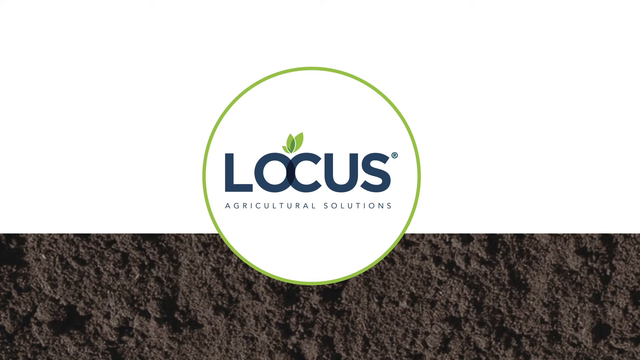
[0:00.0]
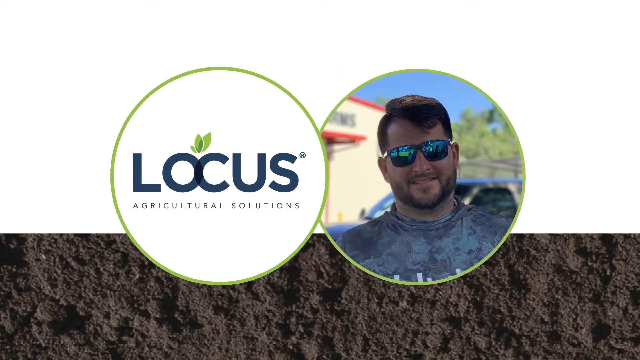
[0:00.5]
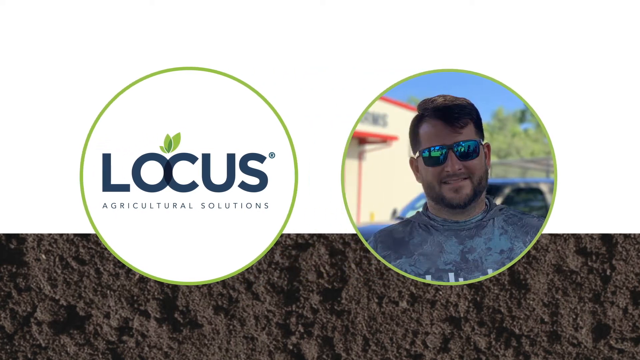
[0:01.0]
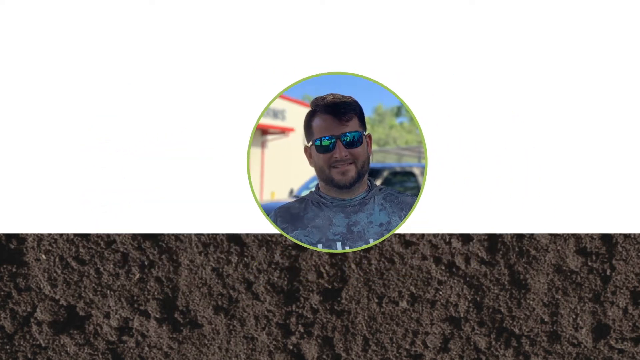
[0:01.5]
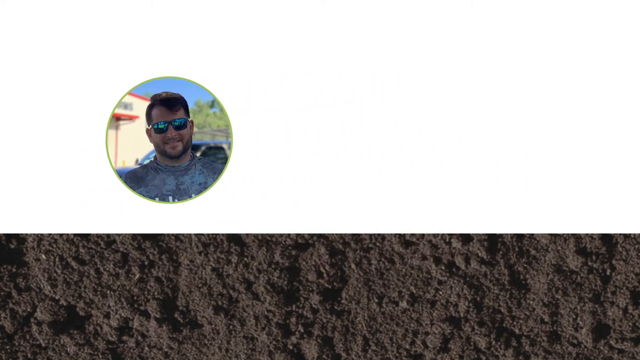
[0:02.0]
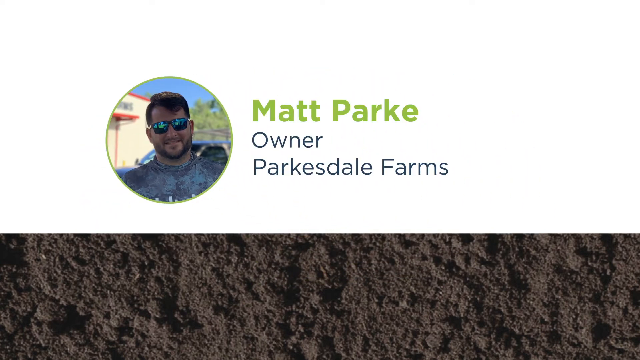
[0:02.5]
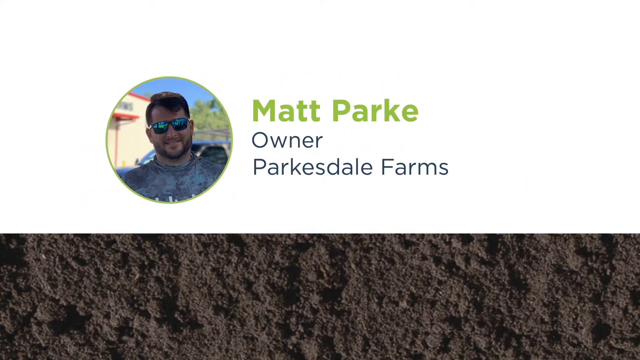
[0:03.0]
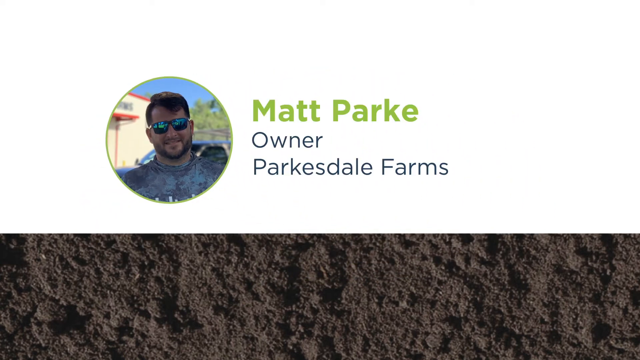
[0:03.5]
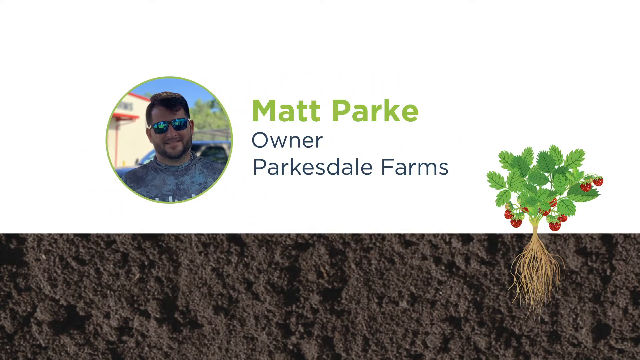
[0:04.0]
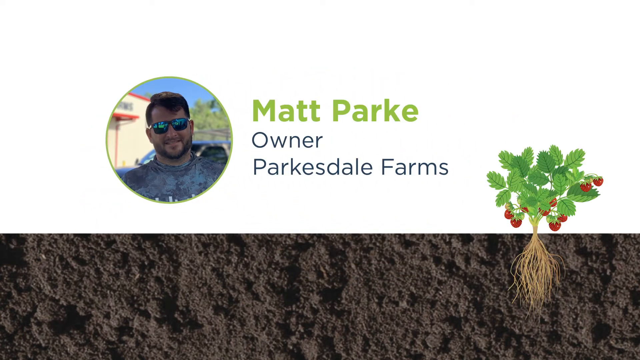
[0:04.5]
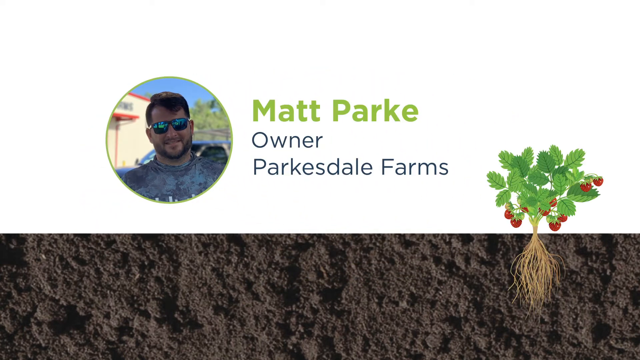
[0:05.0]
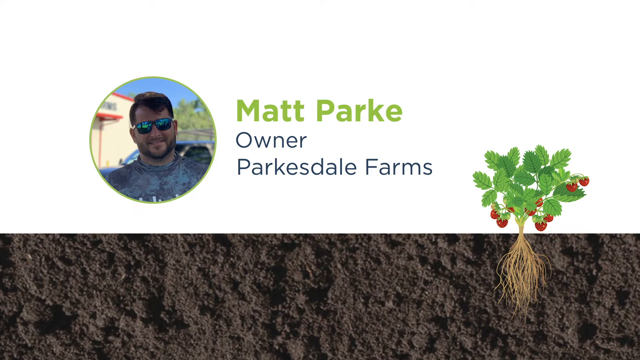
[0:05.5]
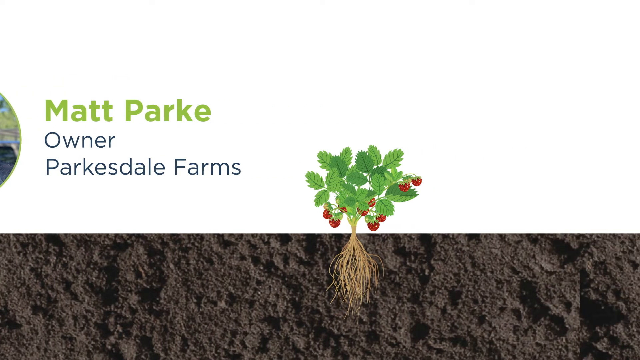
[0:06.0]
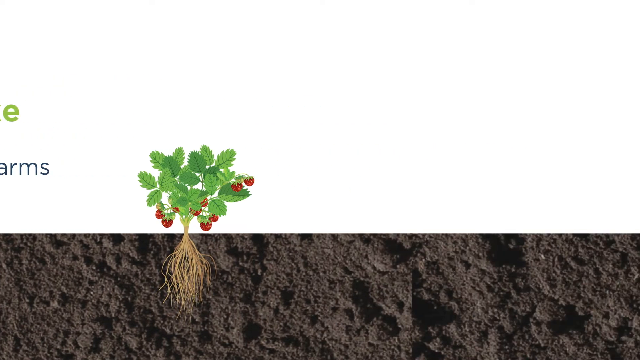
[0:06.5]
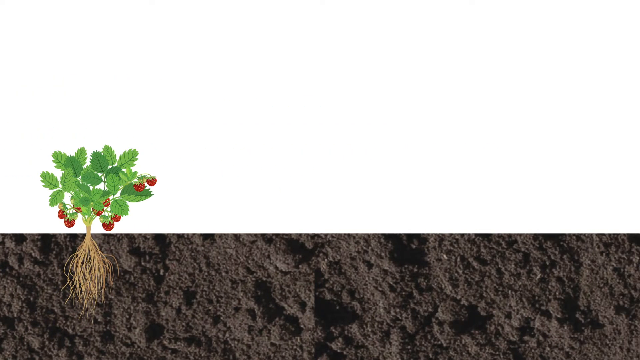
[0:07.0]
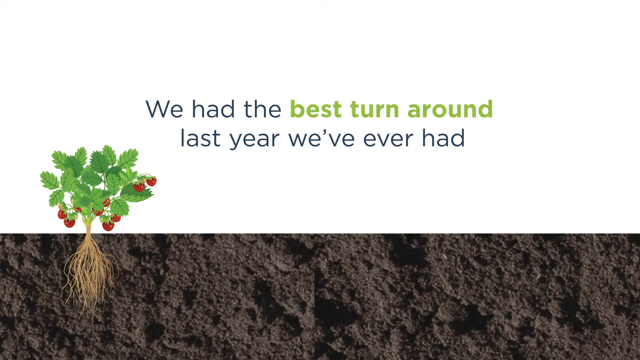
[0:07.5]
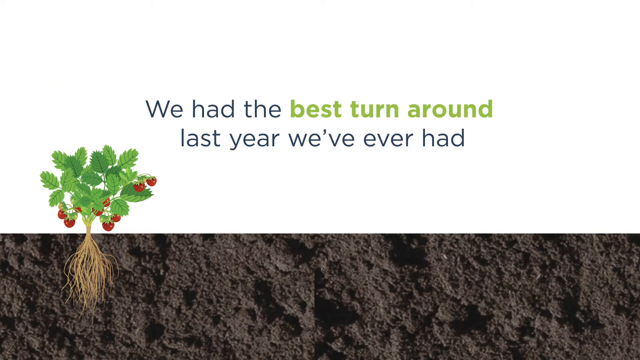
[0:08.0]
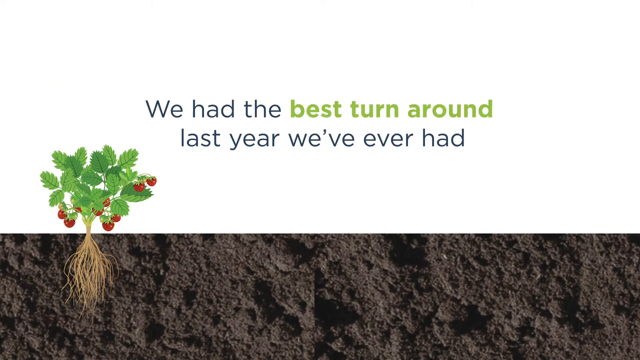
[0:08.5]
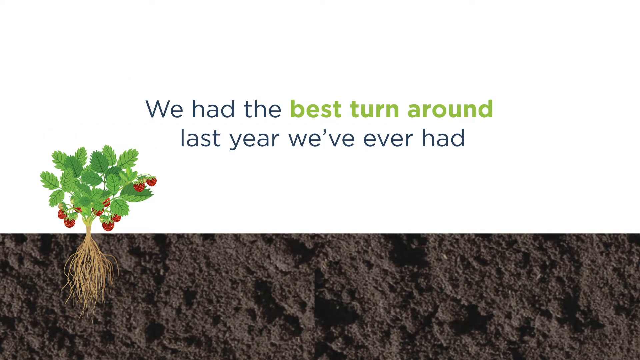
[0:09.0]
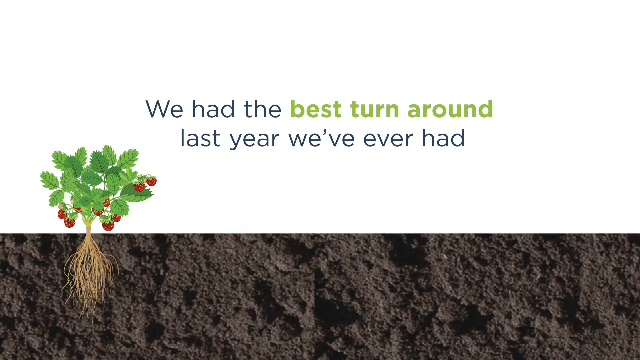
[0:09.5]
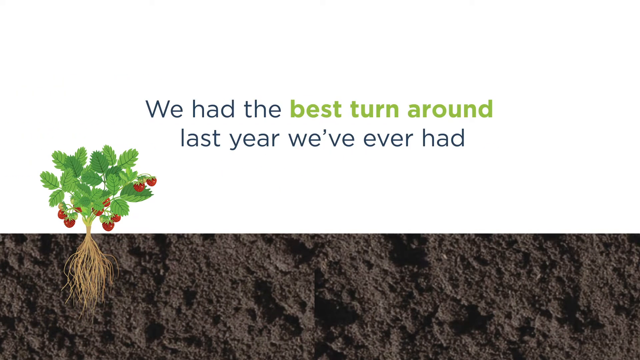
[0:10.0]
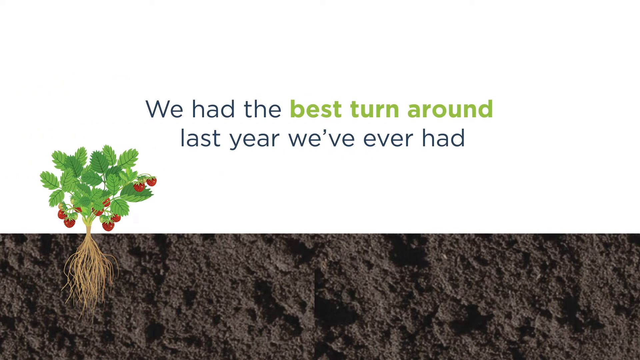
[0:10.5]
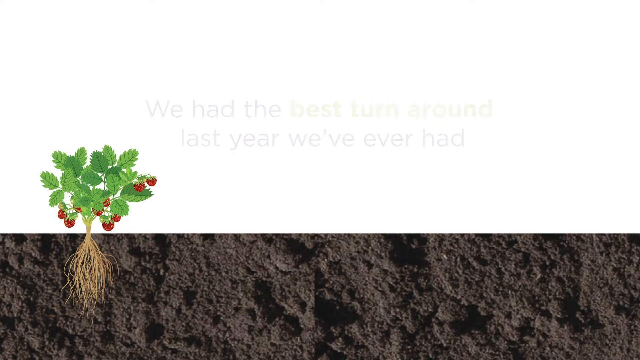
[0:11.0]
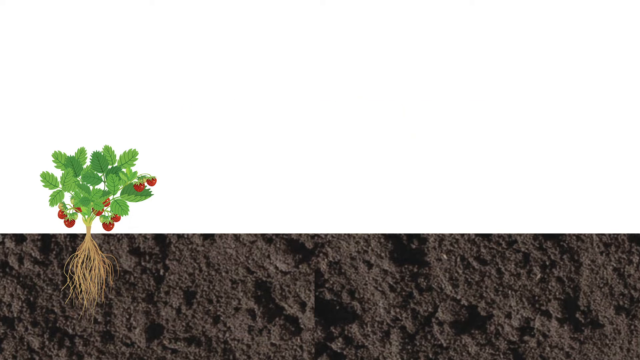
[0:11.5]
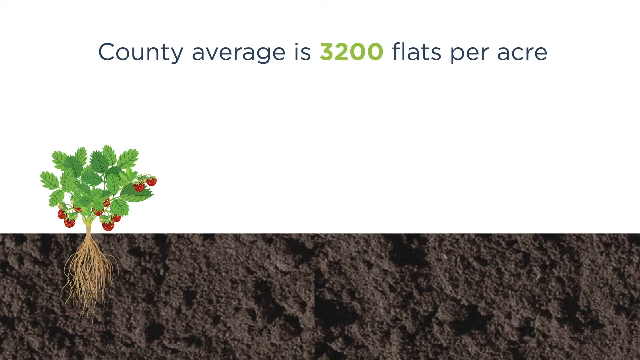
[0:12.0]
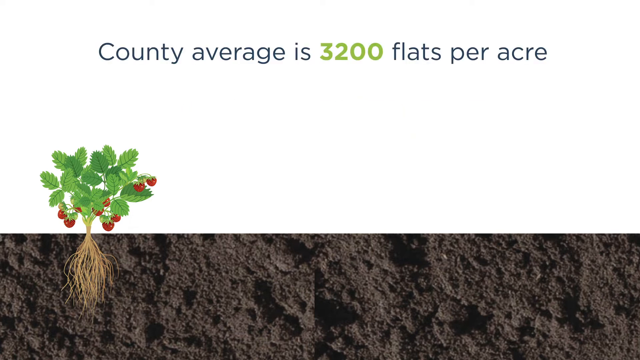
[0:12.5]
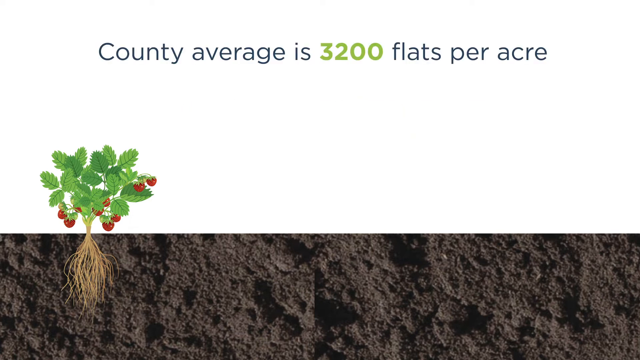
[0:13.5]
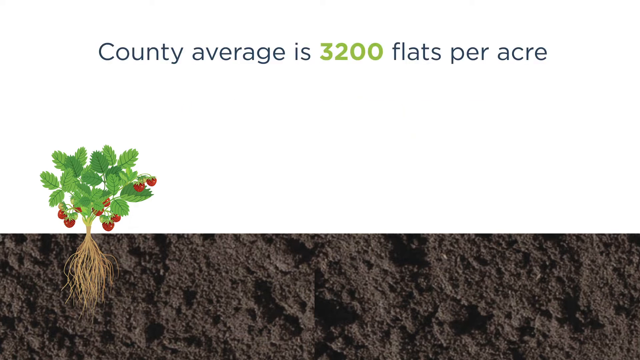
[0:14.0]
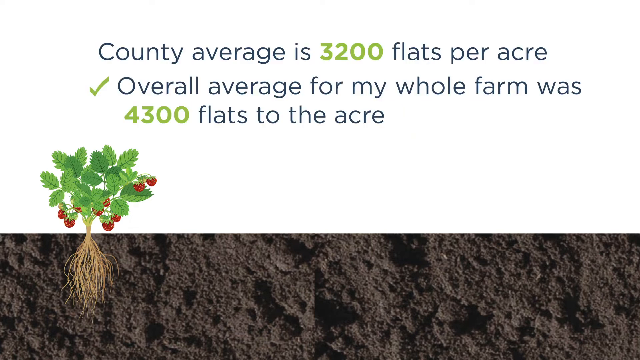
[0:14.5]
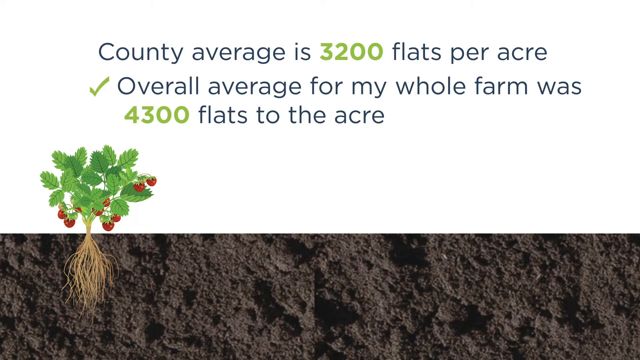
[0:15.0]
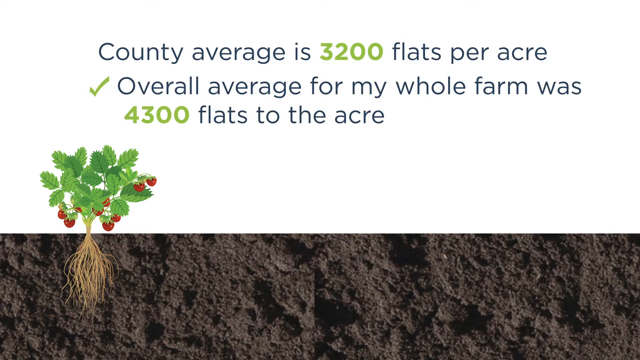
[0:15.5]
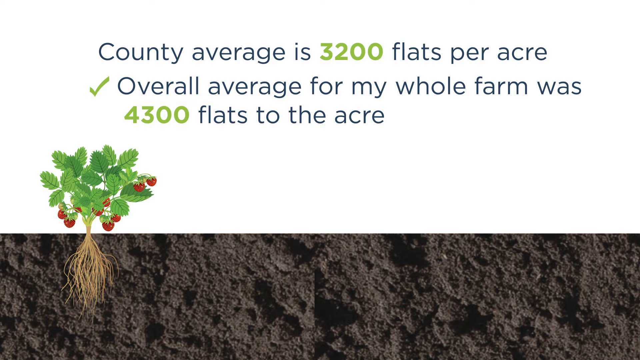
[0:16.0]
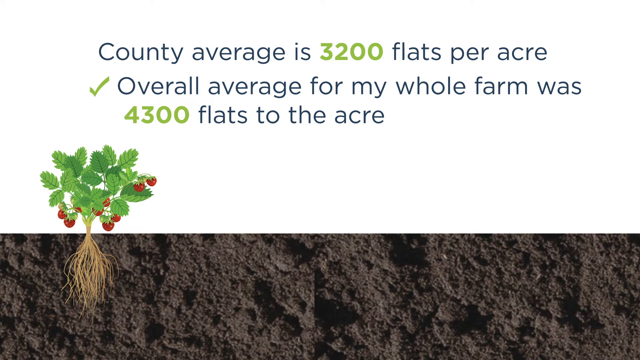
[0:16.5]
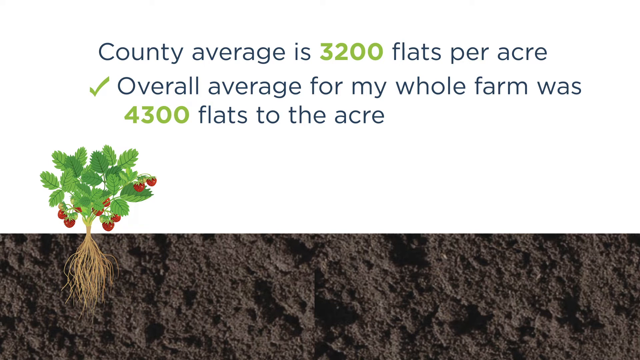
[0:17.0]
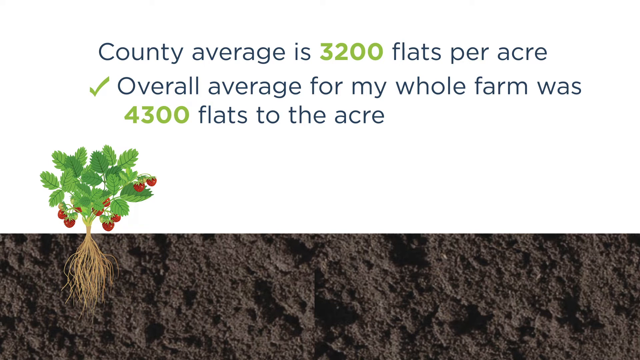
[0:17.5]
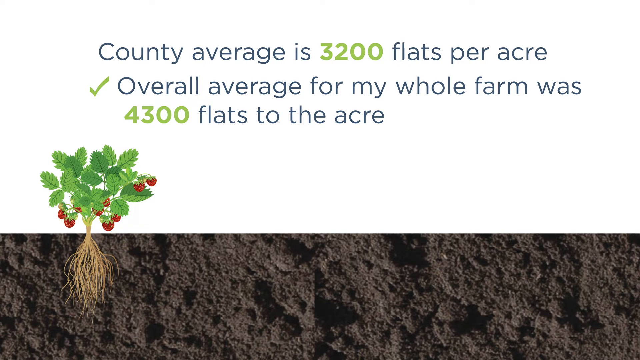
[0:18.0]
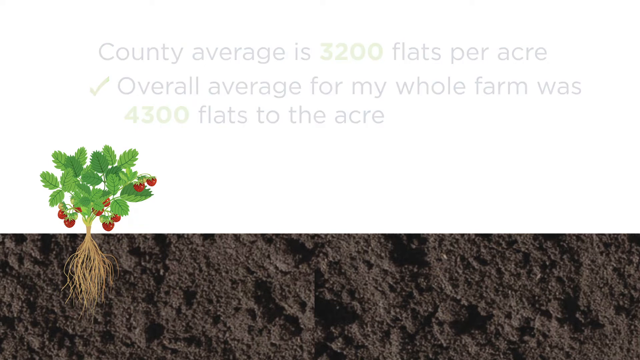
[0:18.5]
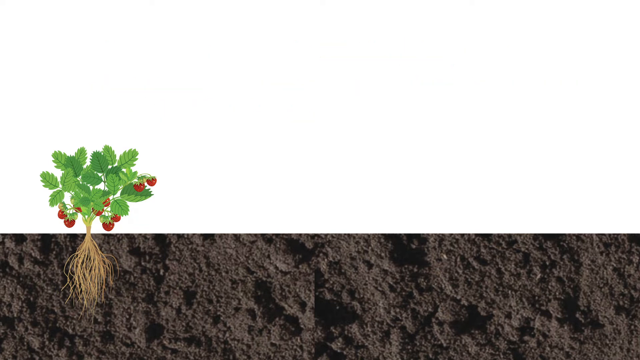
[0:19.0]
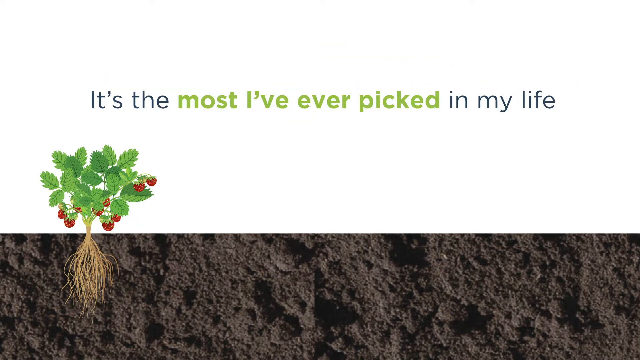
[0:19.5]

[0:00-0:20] The video opens on a round seal bearing the words Locus Agricultural Solutions. The seal splits into two bubbles: the one with Locus on it moves to the left, while the right-side bubble shows a picture of a man named Matt Parke, a white male in his thirties, who is the owner of Parksdale Farms. After the owner is introduced, a crop appears on the screen in an infographic or vector-art style; it looks like it could be tomatoes and has red vegetables. A line of text then appears above it reading: "We had the best turnaround last year we've ever had. County average is 3,200 flats per acre. Overall average for my whole farm was 4,300 flats to the acre. It's the most I've ever picked in my life." Some of the words are in green: the numbers 3,200 and 4,300, and the phrase "most I've ever picked" in the last sentence.